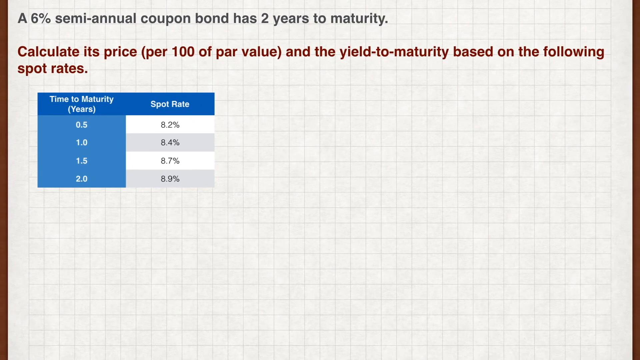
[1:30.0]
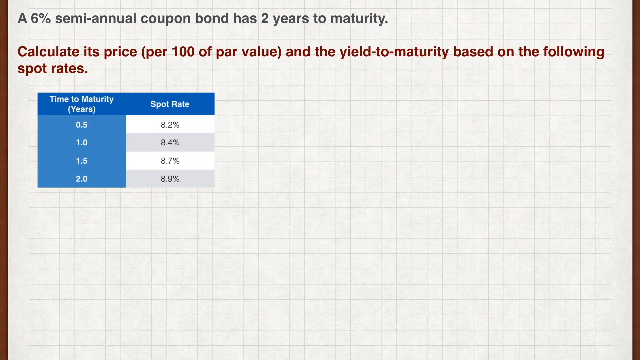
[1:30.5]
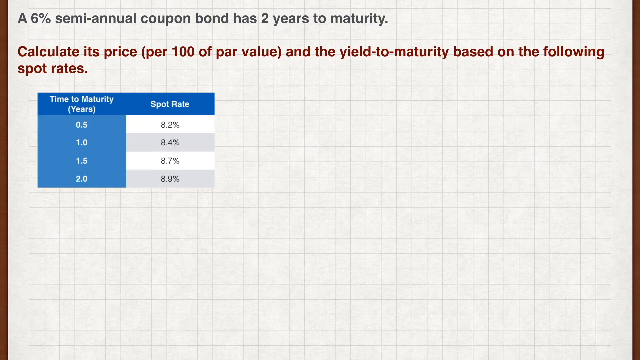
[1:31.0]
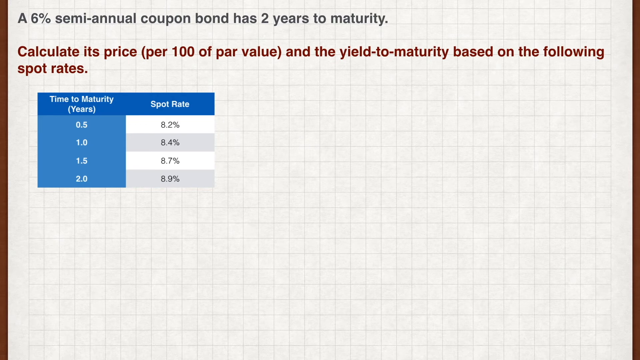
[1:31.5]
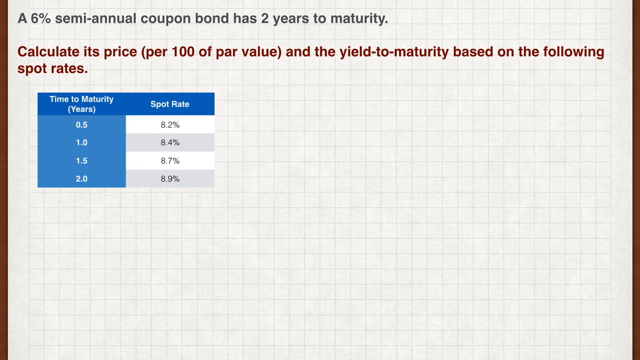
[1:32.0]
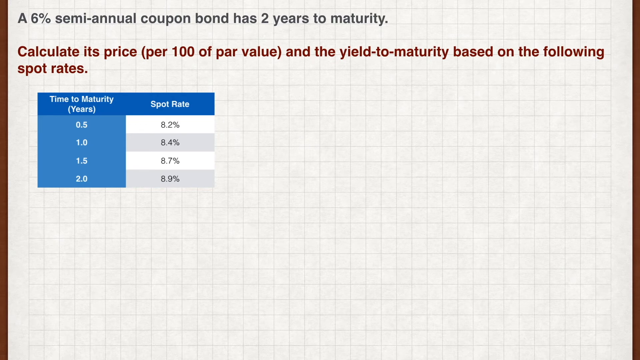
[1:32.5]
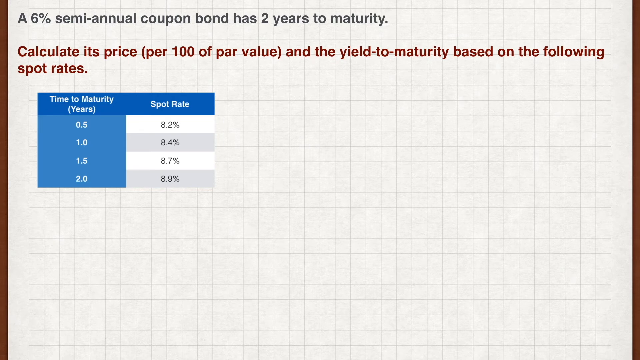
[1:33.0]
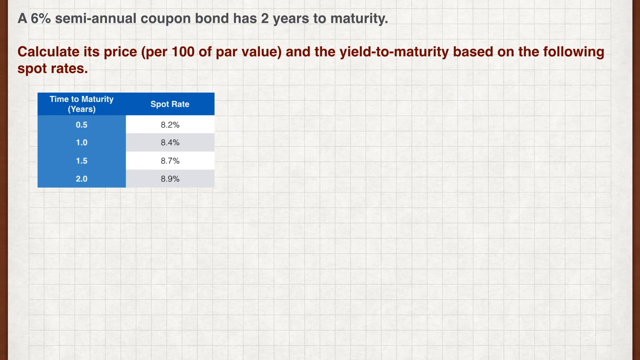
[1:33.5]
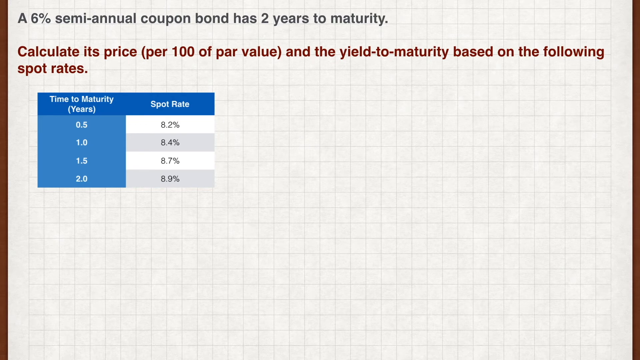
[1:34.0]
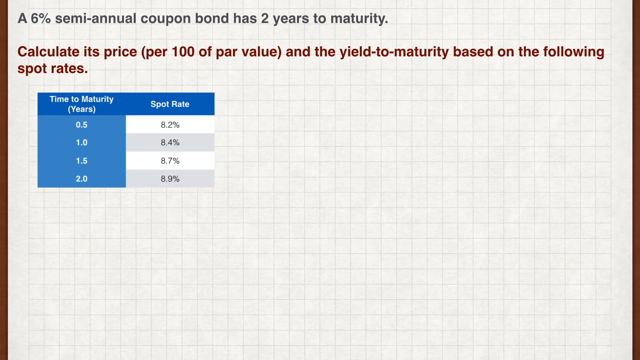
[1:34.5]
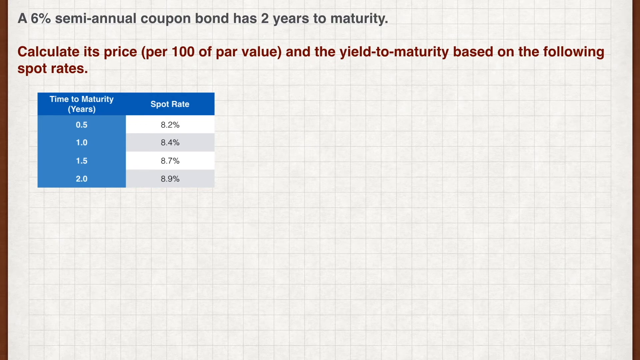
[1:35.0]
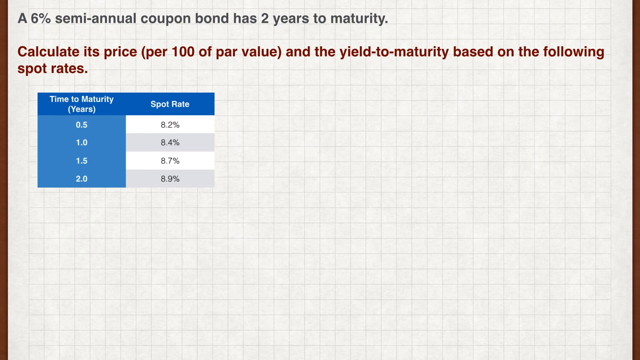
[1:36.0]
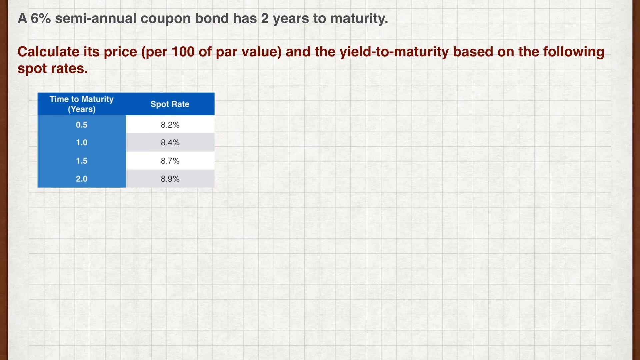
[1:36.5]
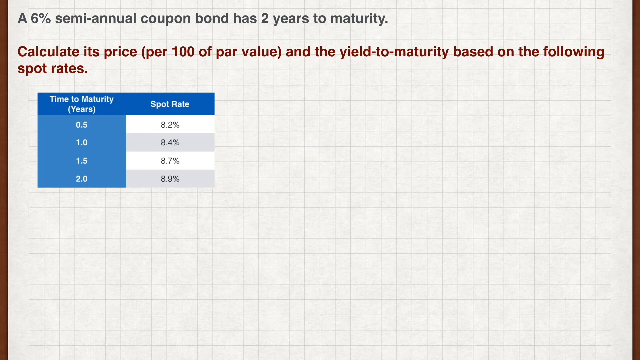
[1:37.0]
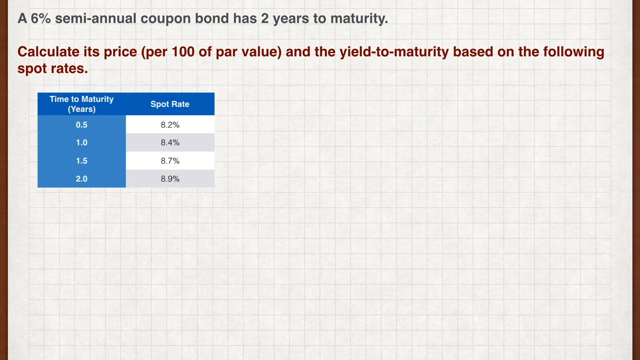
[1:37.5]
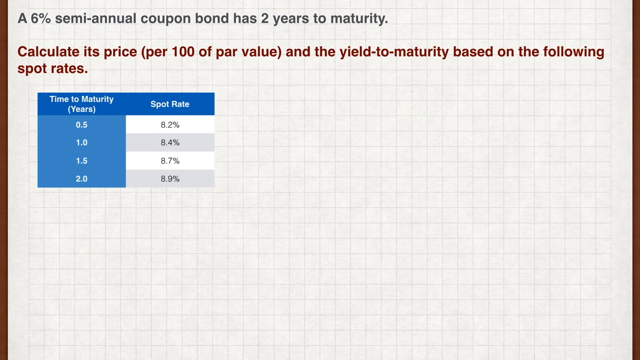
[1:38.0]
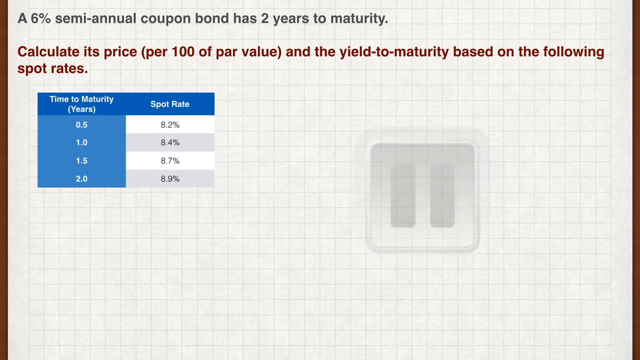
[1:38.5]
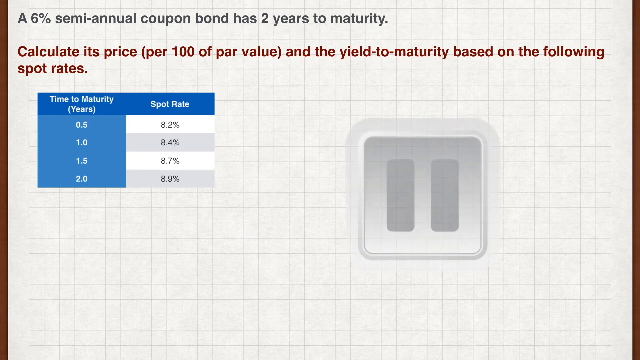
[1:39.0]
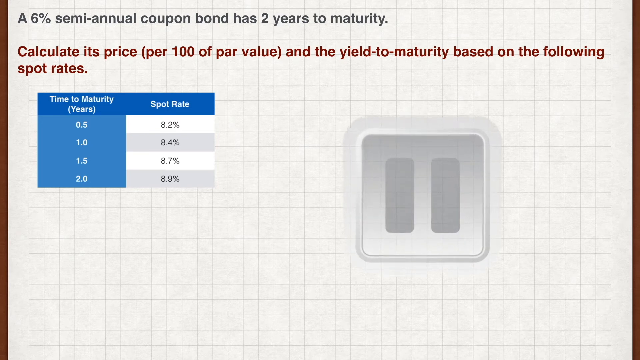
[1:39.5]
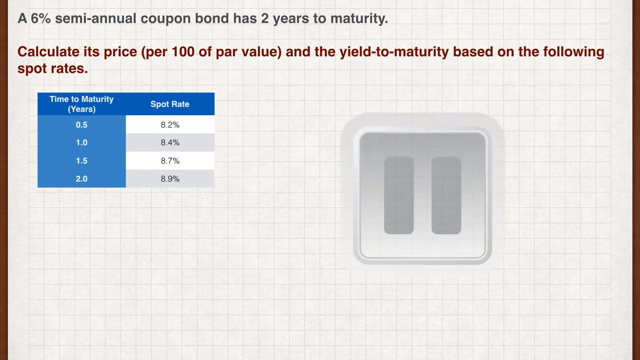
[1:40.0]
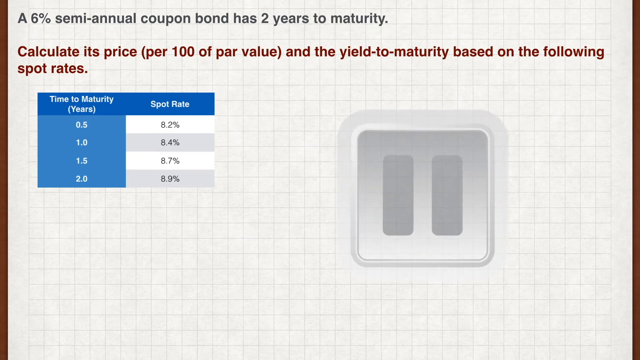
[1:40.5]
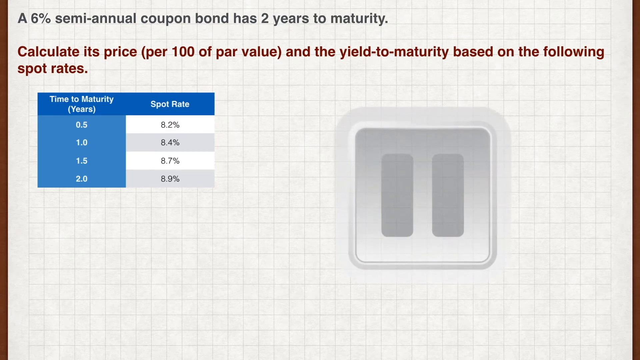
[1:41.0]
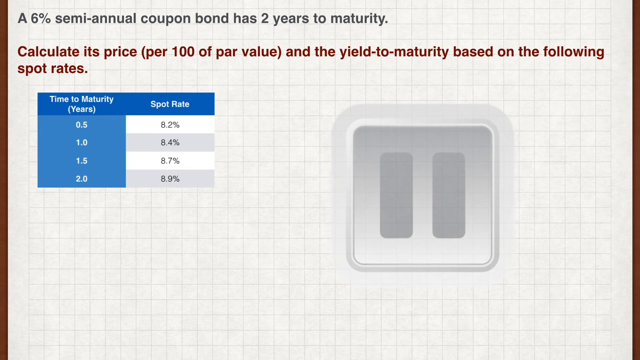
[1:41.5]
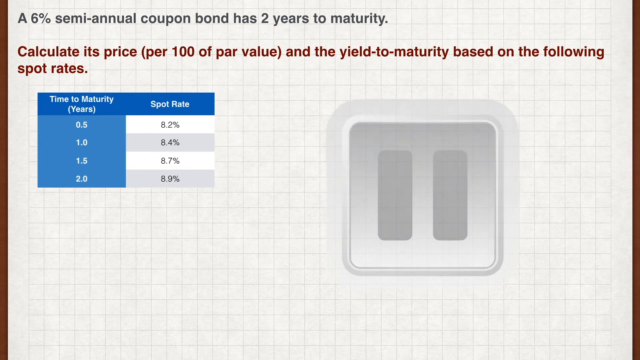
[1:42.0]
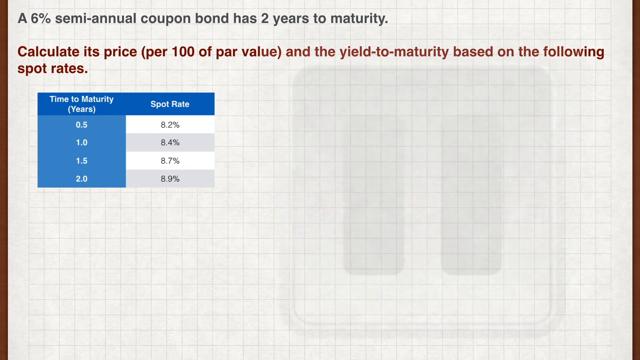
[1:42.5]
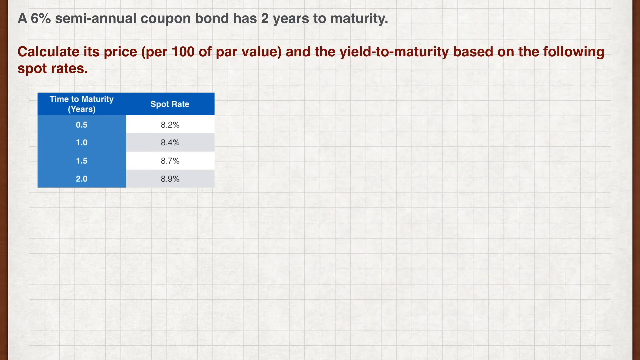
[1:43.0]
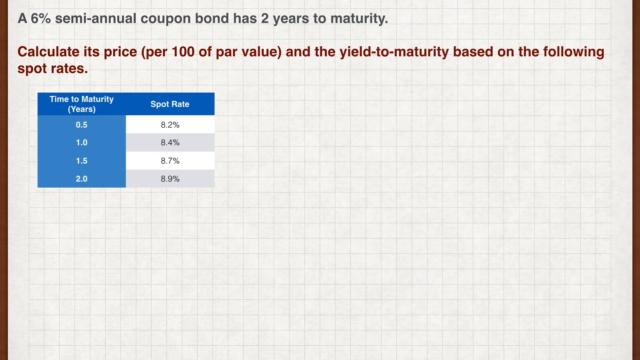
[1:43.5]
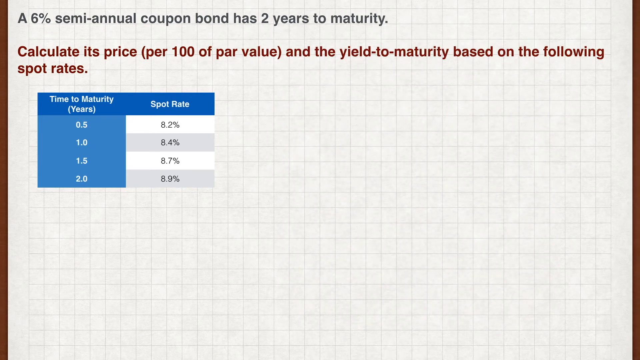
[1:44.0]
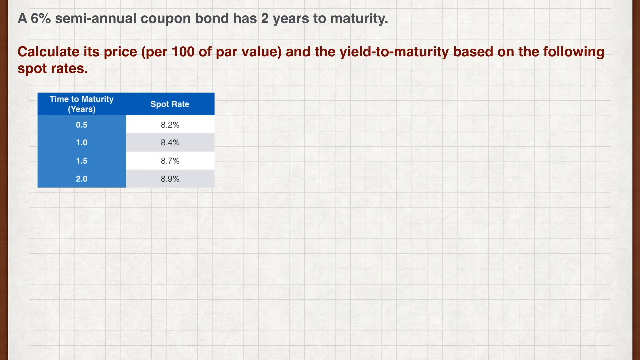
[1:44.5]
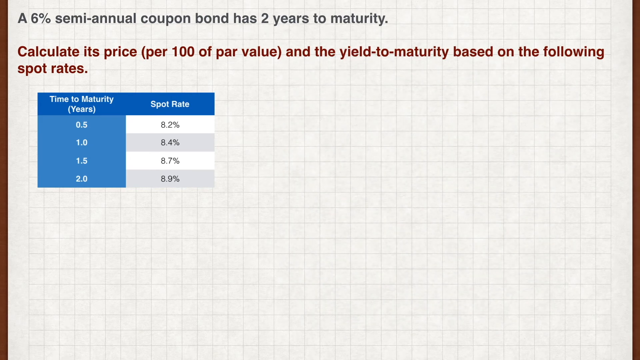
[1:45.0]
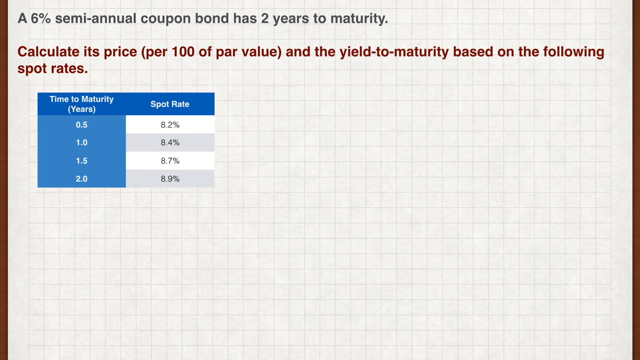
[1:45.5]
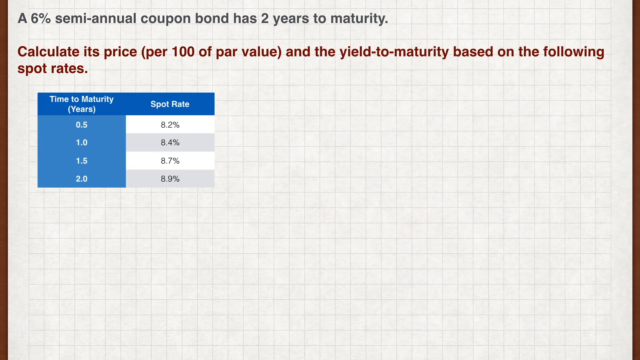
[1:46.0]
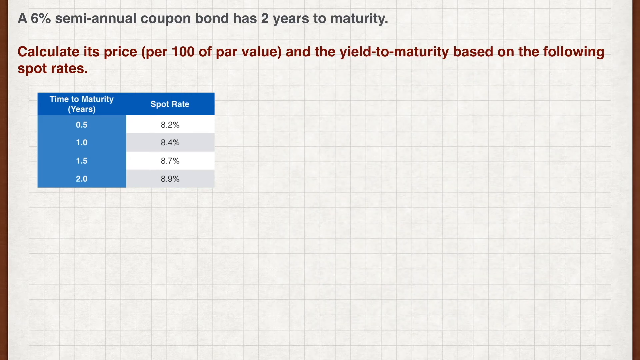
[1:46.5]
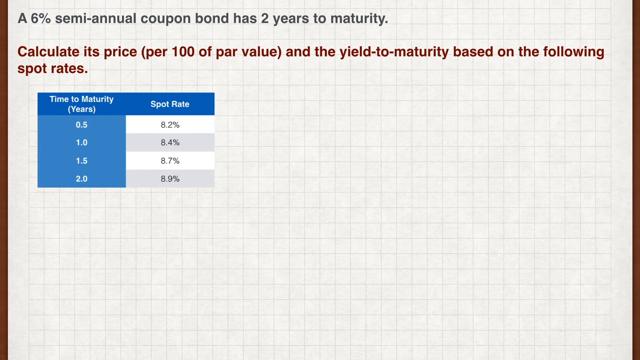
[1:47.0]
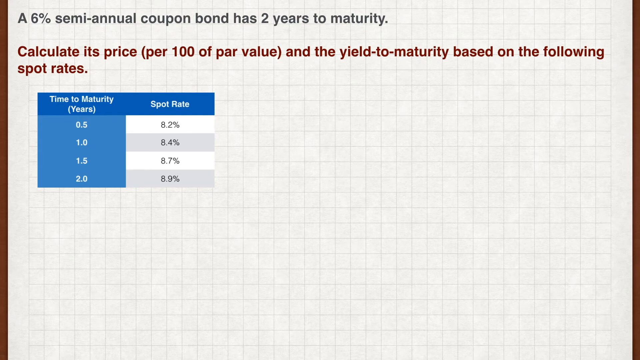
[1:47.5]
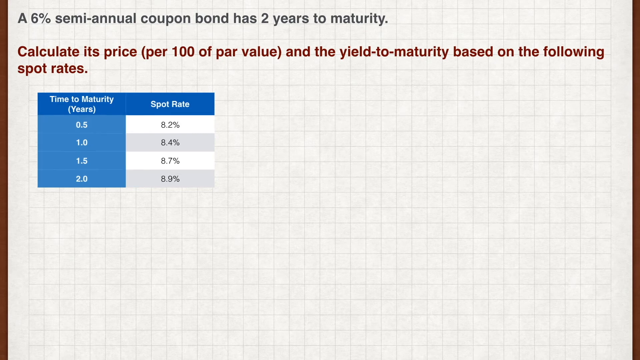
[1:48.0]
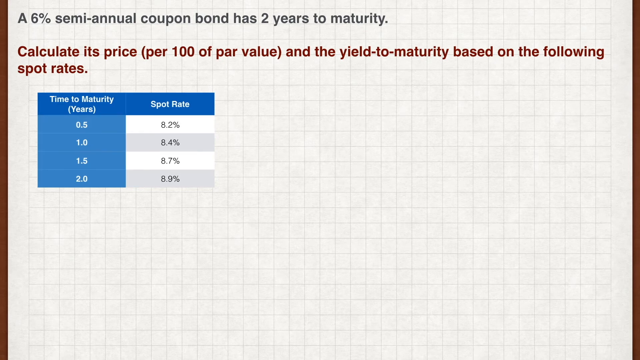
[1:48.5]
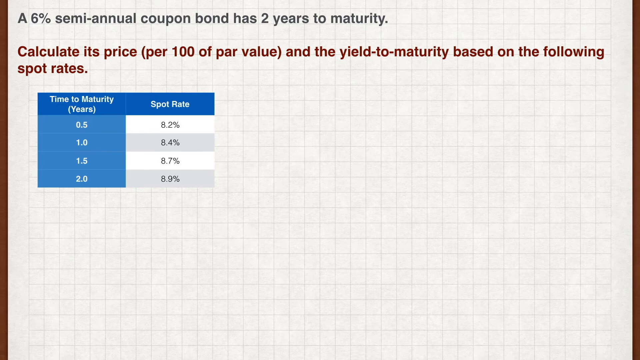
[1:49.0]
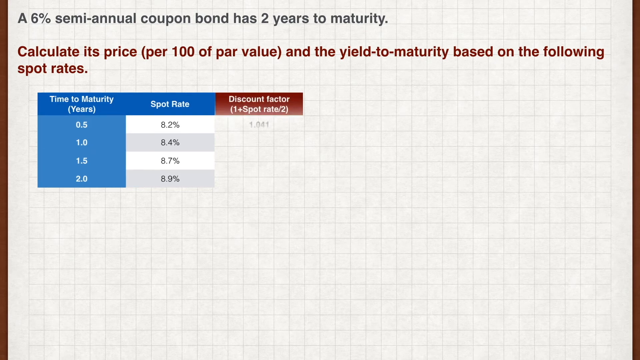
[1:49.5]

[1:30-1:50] Text mentions yields to maturity, and underneath it, in red letters, reads "calculate its price per 100 of par value and the yield to maturity based on the following spot rates". Below that is a blue chart. The left column reads "time to maturity in years" in increments of 0.5: 0.5, 1.0, 1.5 and 2.0. The right column, in alternating white and gray, has "spot rate" at the top: 8.2 for the half year, 8.4% for 1.0, 8.7% for 1.5 years, and seemingly 8.9% at the two-year maturity. There also seems to be a giant pause button on the left side of the video.